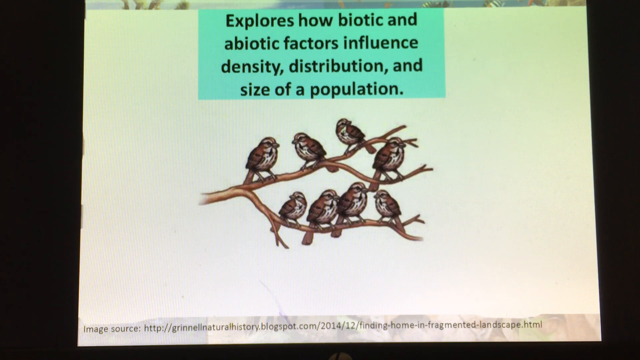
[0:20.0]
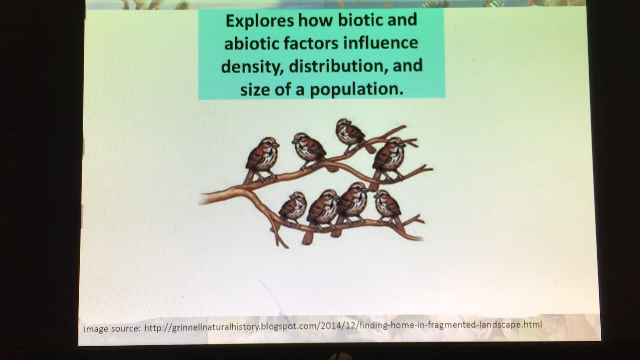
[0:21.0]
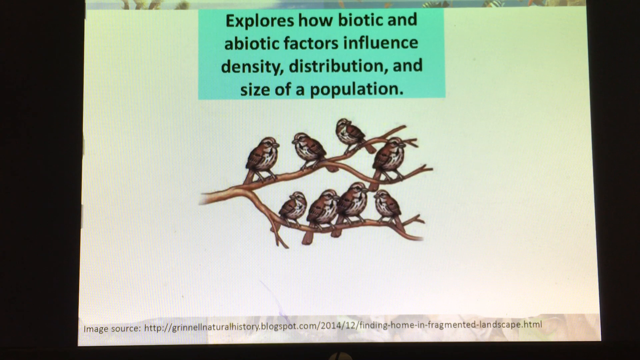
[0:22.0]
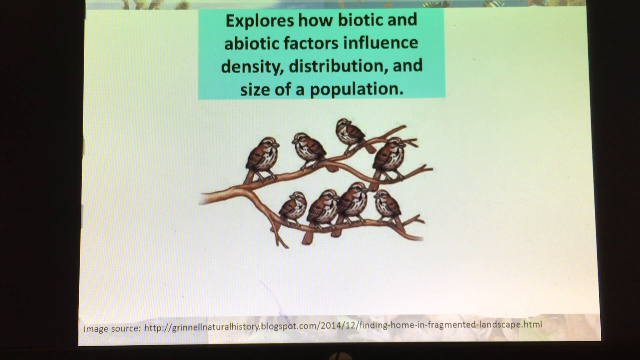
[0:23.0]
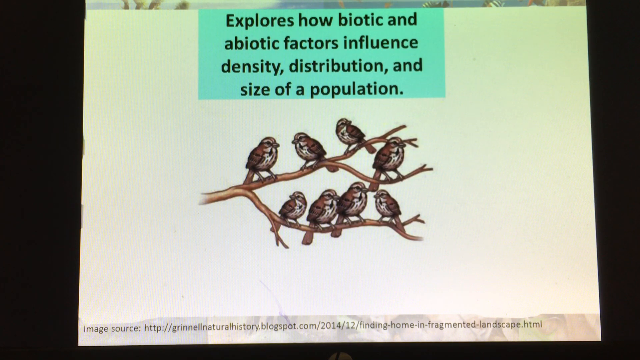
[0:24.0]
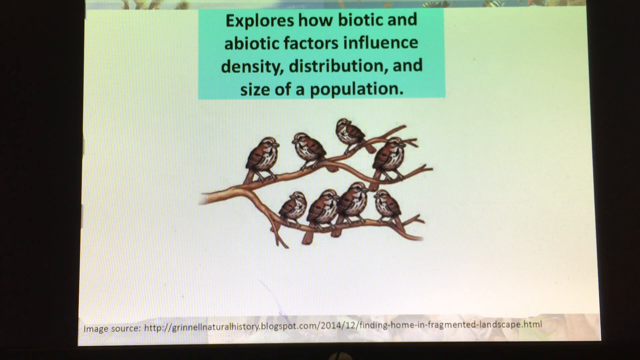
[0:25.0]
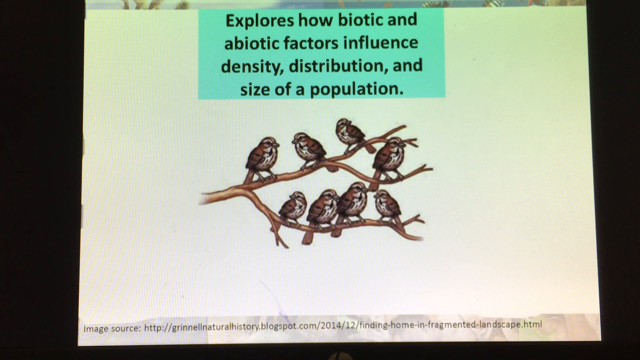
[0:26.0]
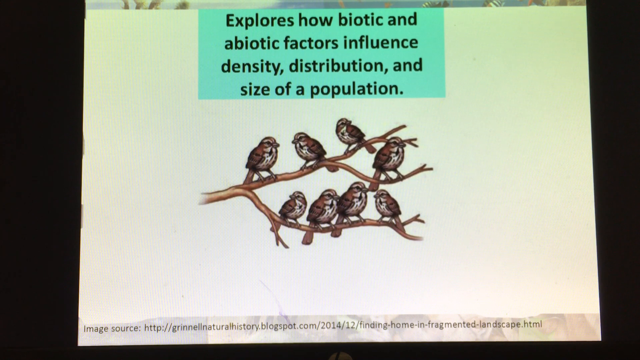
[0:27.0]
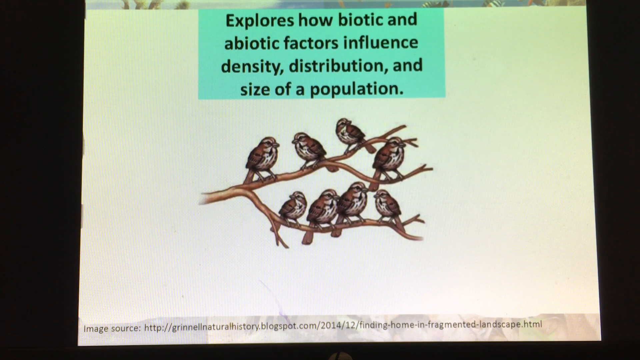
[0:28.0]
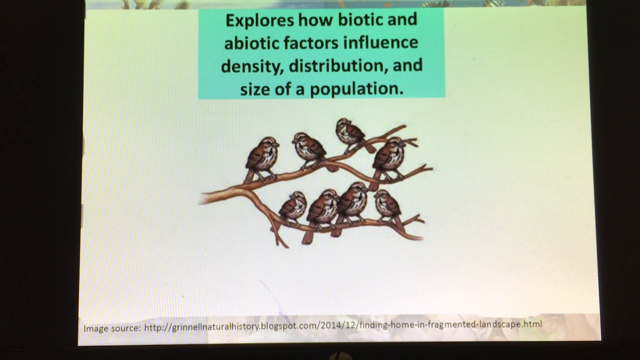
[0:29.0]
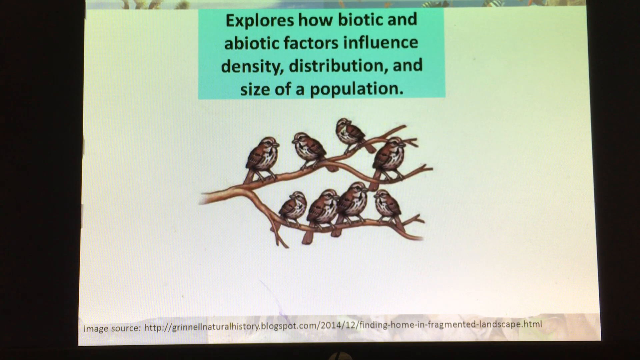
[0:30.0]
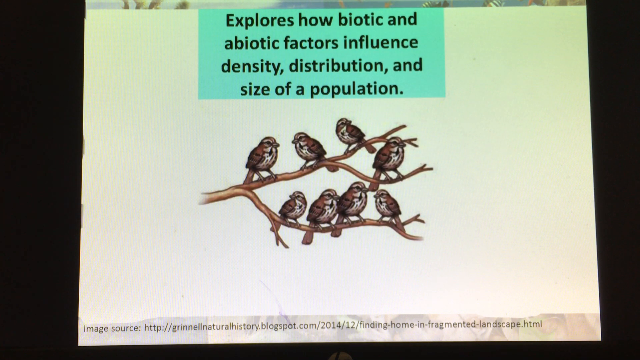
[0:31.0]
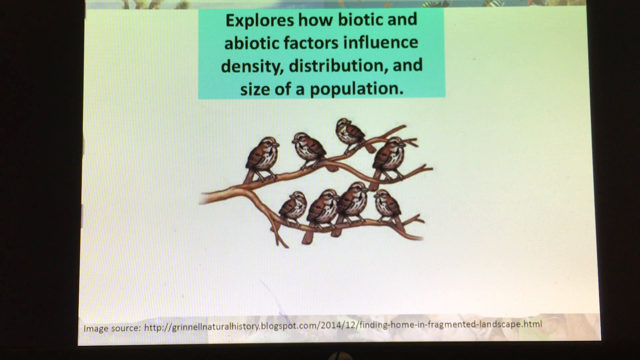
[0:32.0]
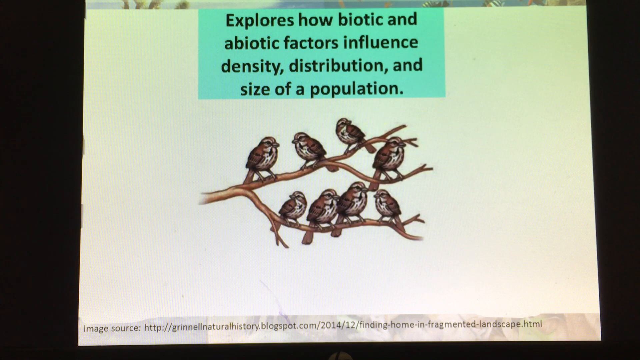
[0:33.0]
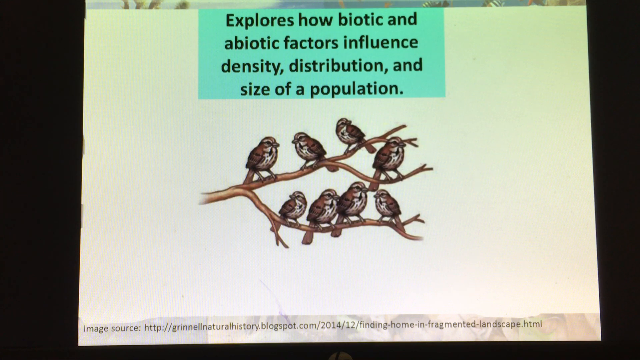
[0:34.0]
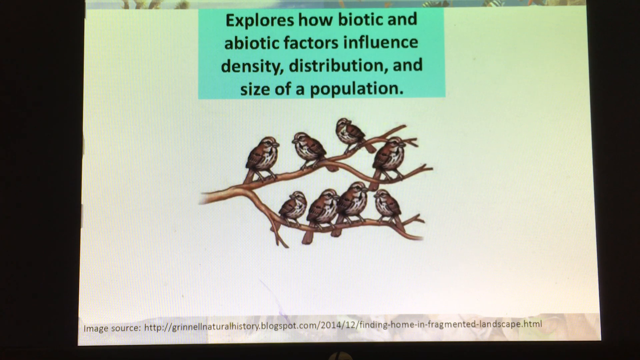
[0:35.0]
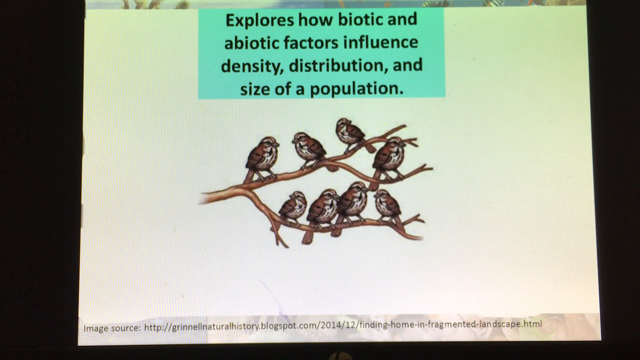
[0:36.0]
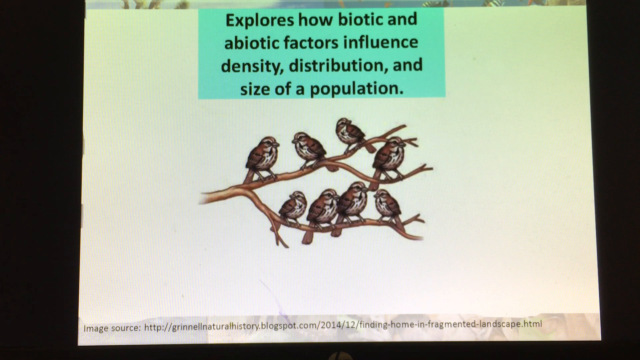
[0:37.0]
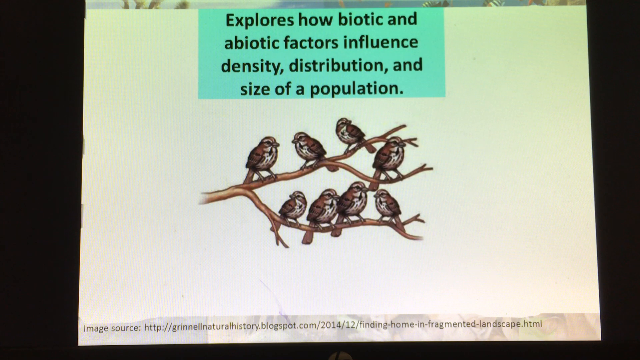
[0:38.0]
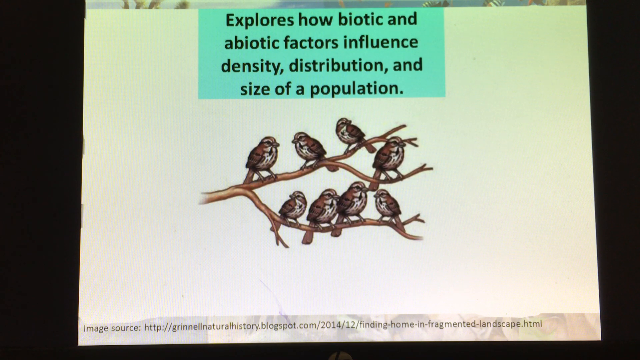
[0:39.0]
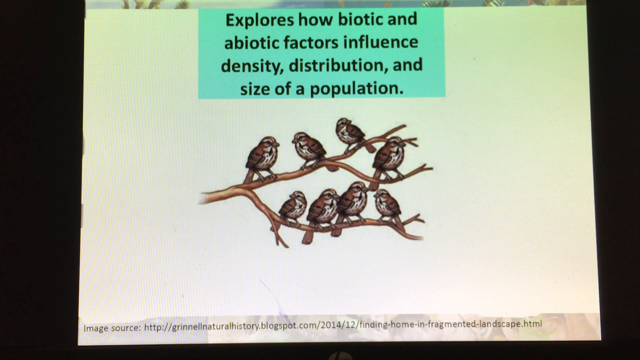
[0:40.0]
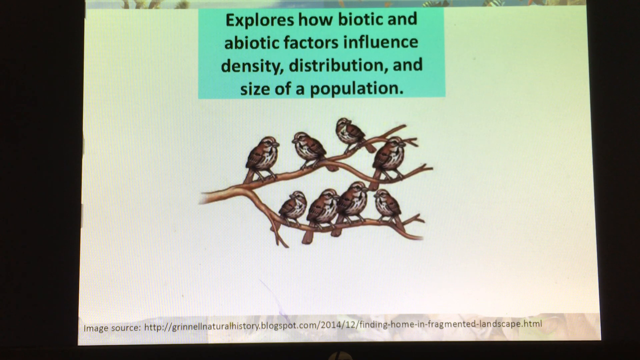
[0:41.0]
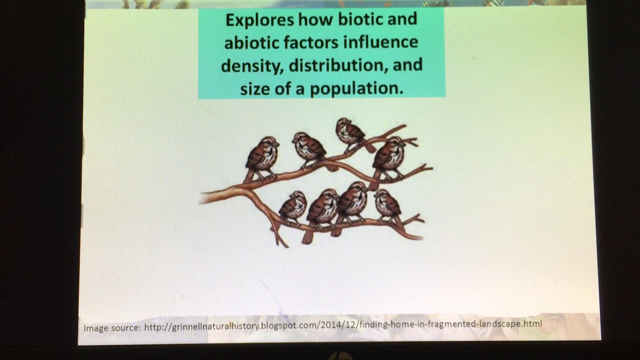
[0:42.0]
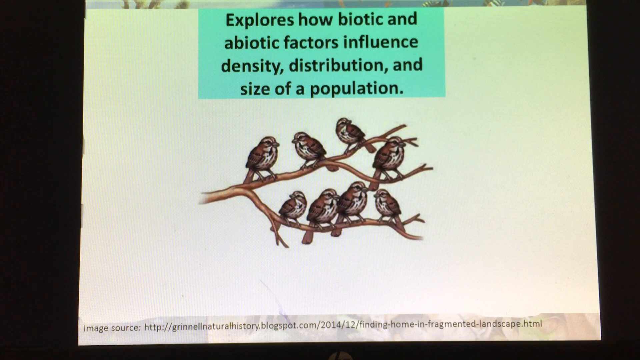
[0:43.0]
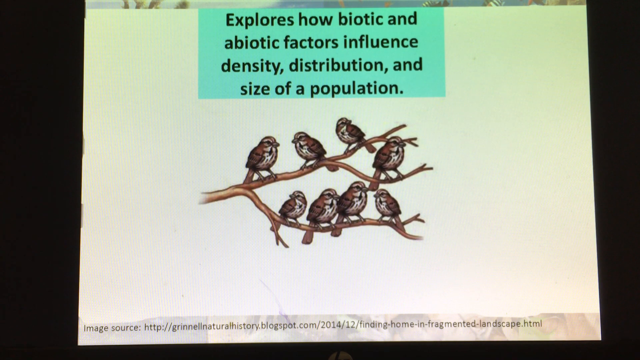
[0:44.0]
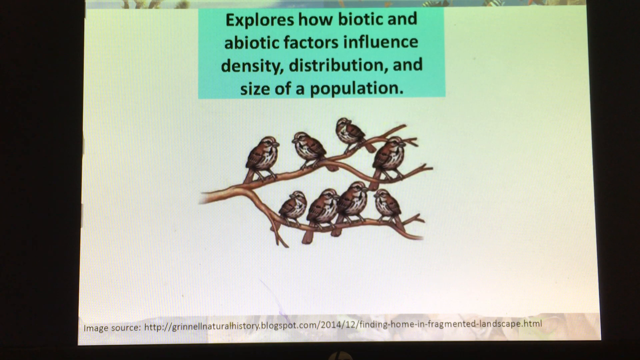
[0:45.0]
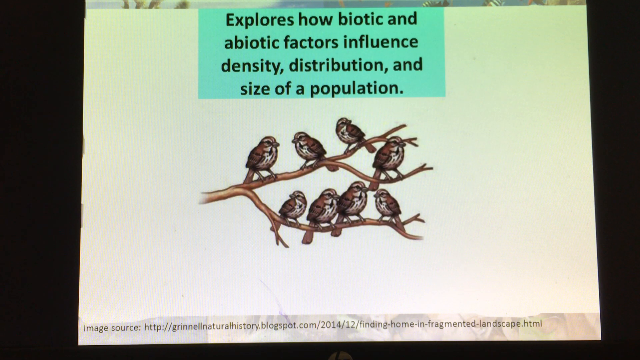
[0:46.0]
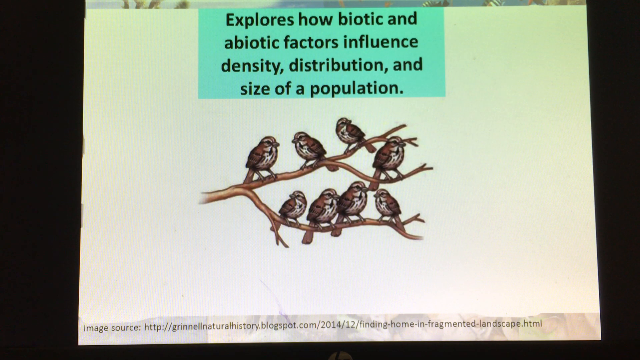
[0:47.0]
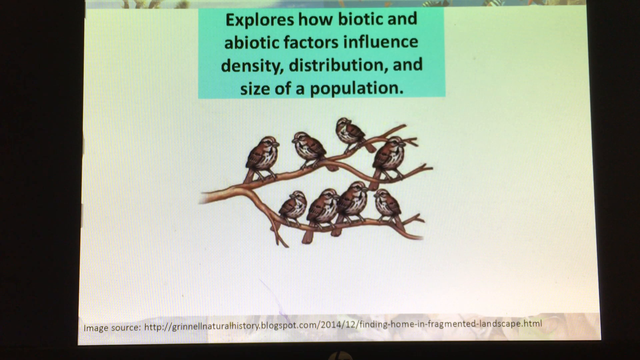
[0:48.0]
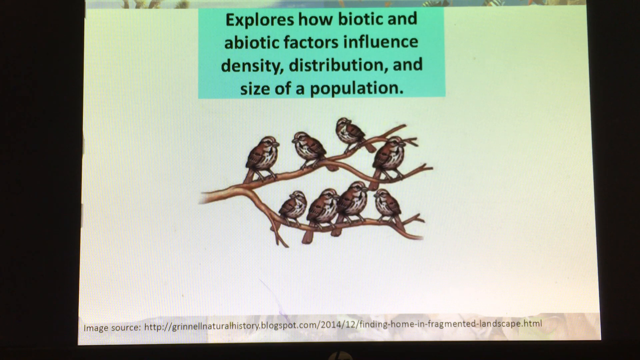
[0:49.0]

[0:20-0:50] The same slide remains, with text at the very top and in the center stating "explores how biotic and abiotic factors influence density, distribution, and the size of the population." Below is the picture of eight birds on three branches: three birds on the top branch, one on the smaller branch, and four below. All of the birds are brown and white. The slide stays the same for over 20 seconds without changing.